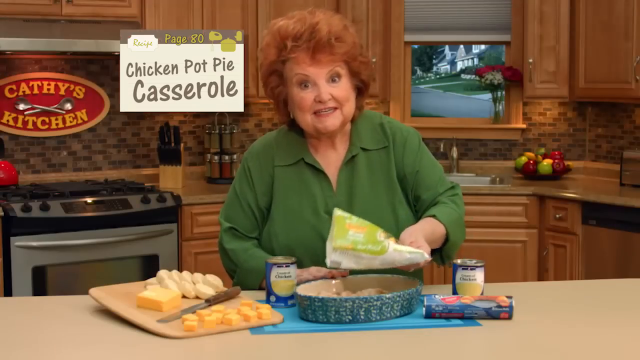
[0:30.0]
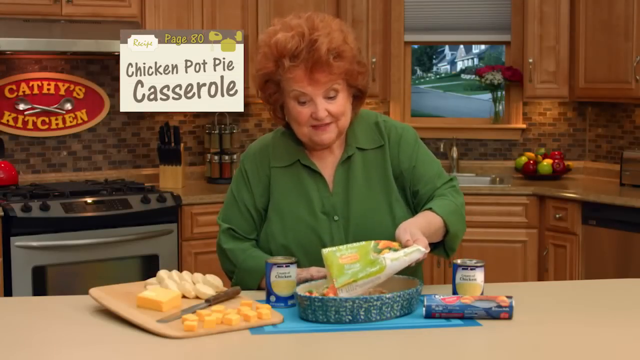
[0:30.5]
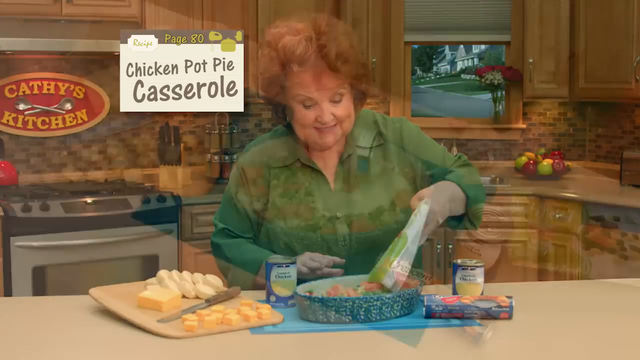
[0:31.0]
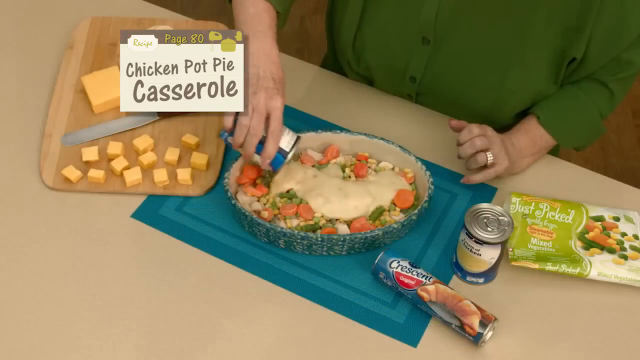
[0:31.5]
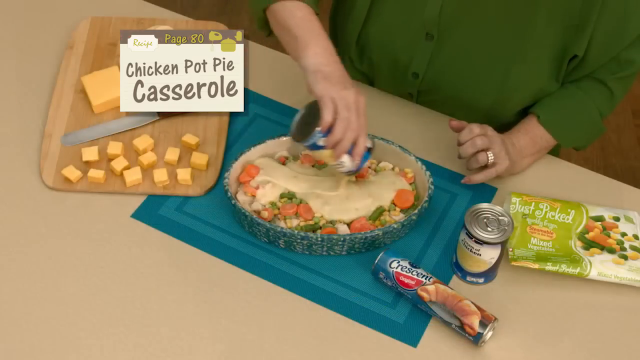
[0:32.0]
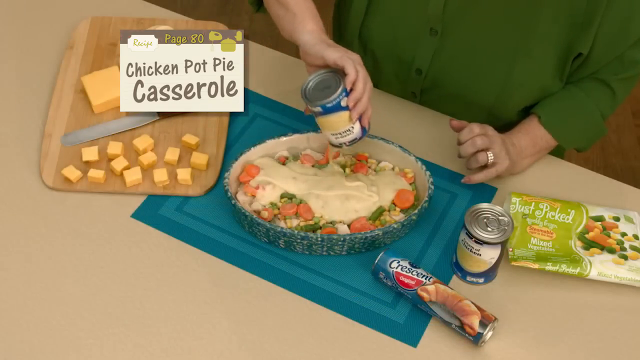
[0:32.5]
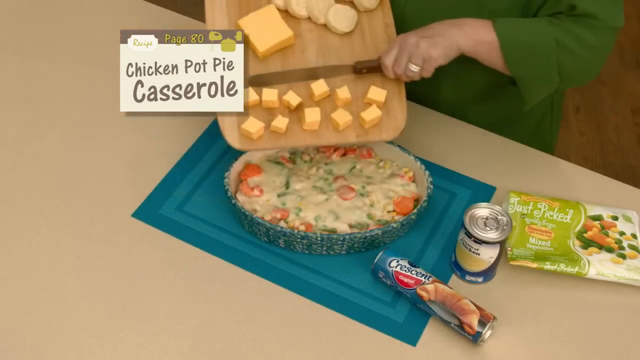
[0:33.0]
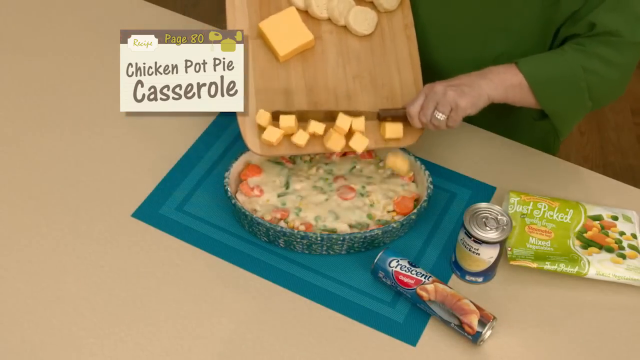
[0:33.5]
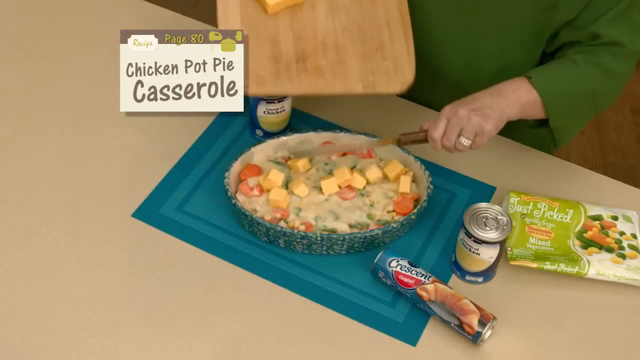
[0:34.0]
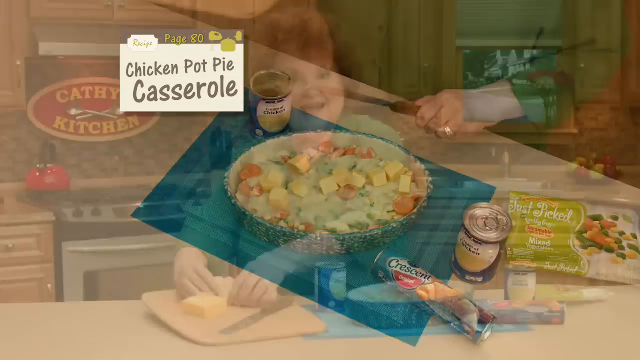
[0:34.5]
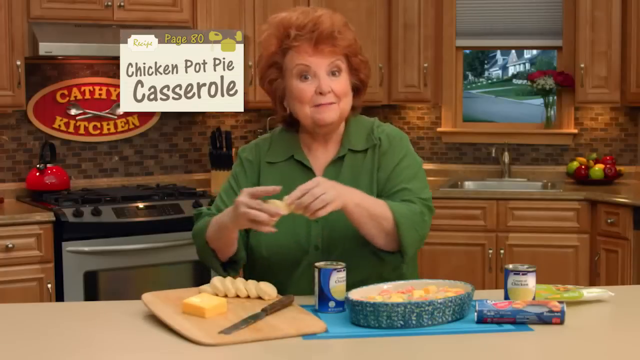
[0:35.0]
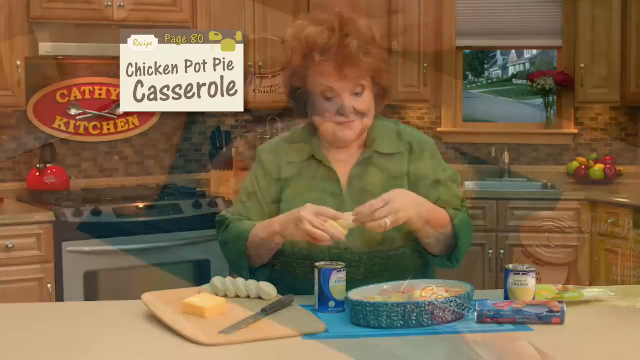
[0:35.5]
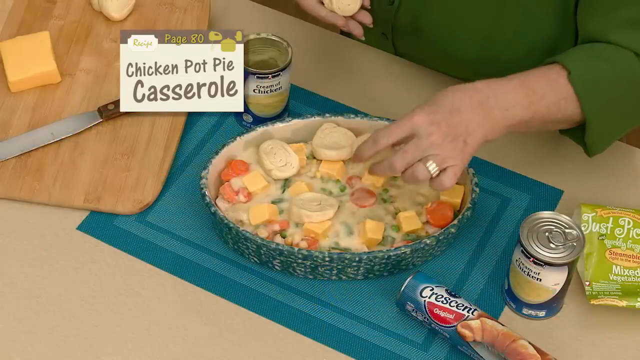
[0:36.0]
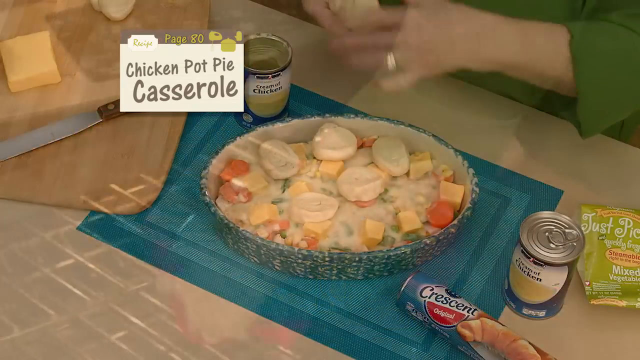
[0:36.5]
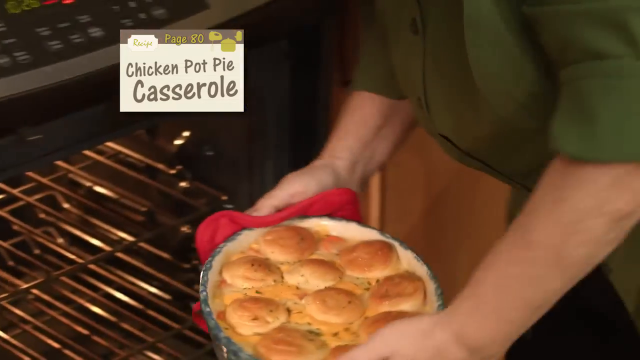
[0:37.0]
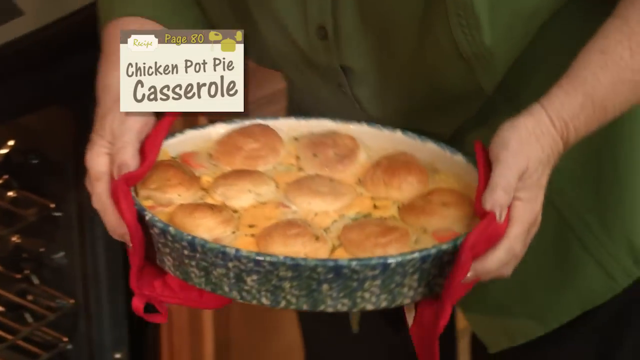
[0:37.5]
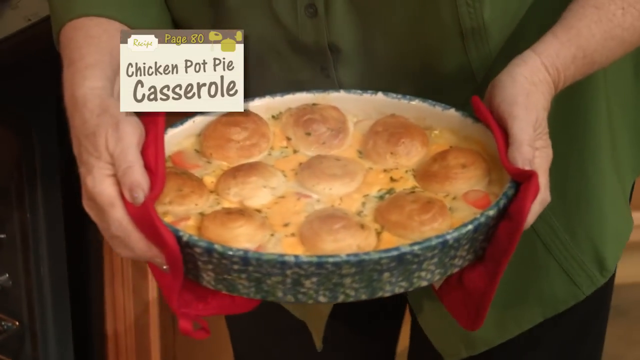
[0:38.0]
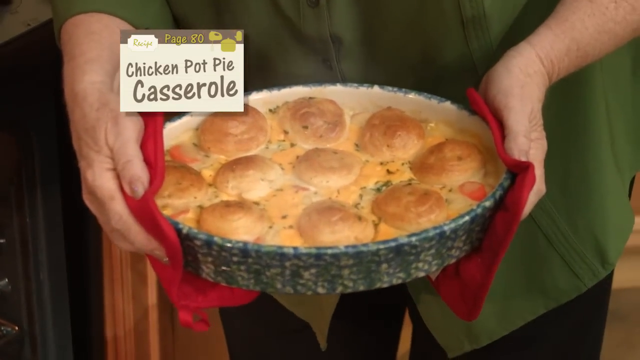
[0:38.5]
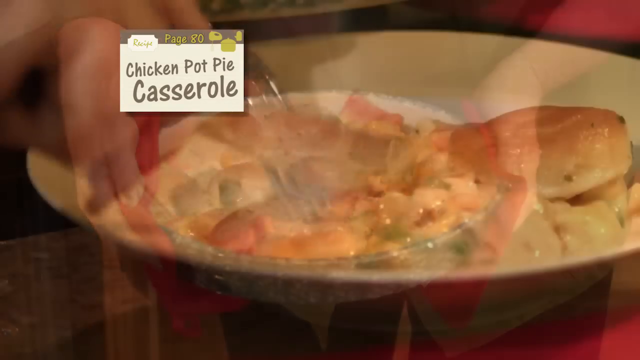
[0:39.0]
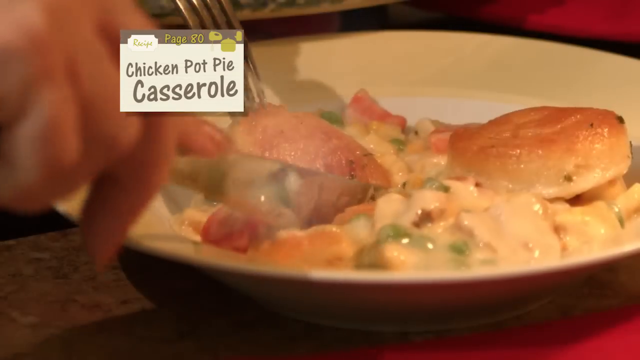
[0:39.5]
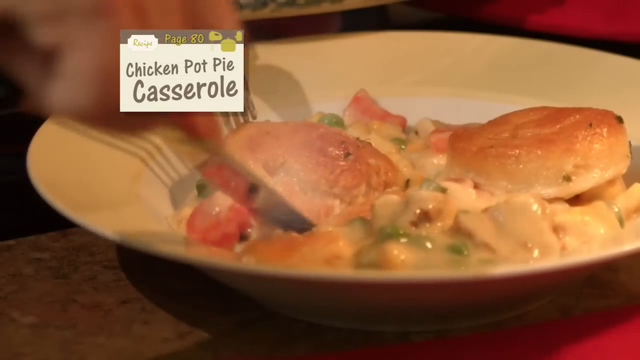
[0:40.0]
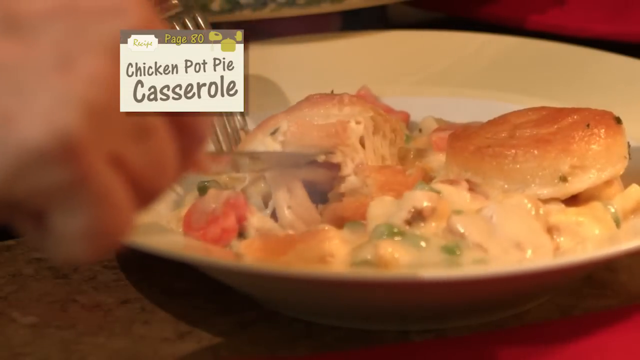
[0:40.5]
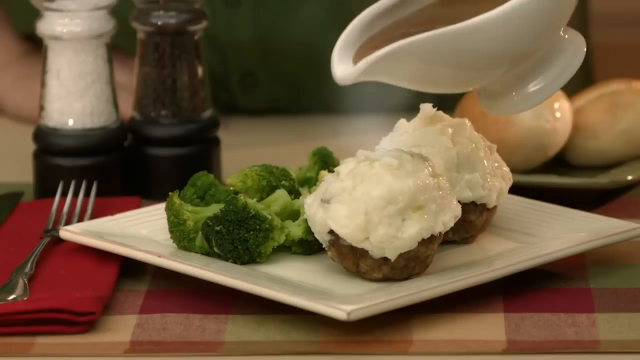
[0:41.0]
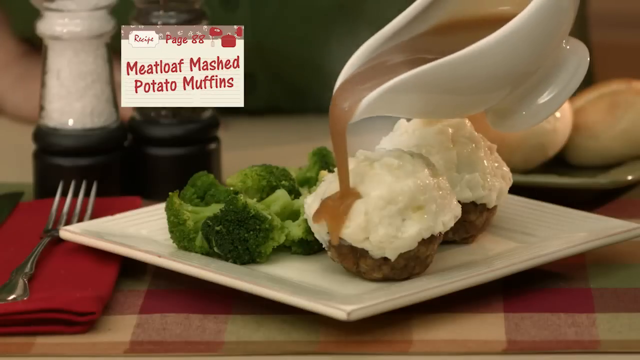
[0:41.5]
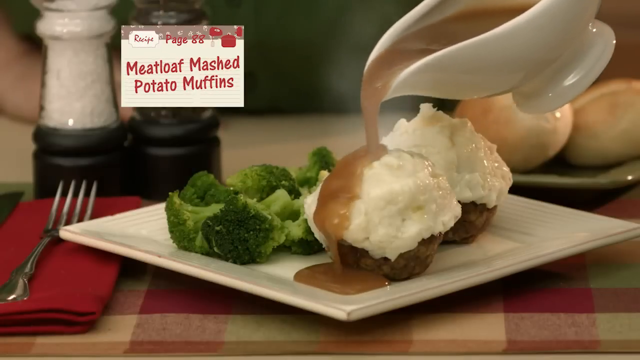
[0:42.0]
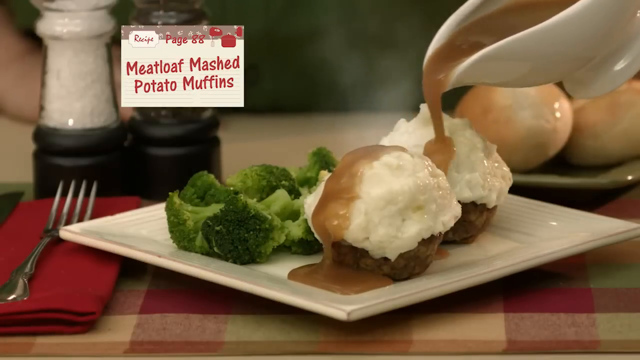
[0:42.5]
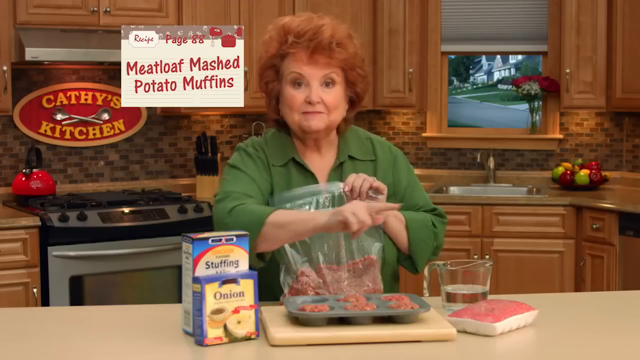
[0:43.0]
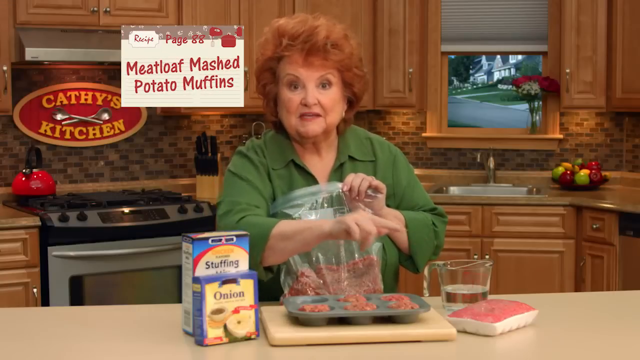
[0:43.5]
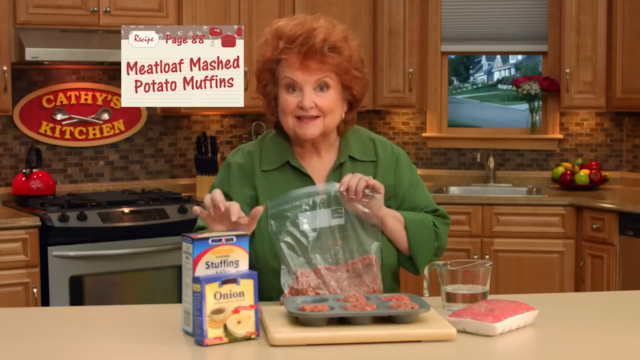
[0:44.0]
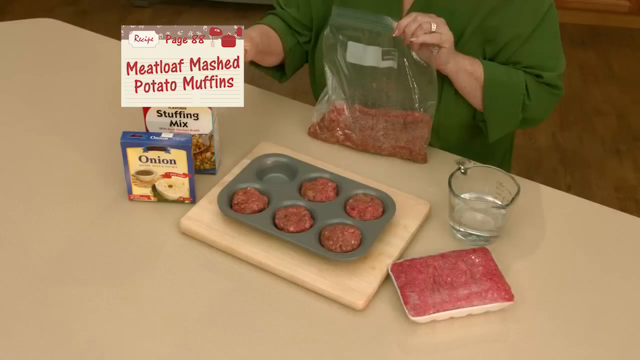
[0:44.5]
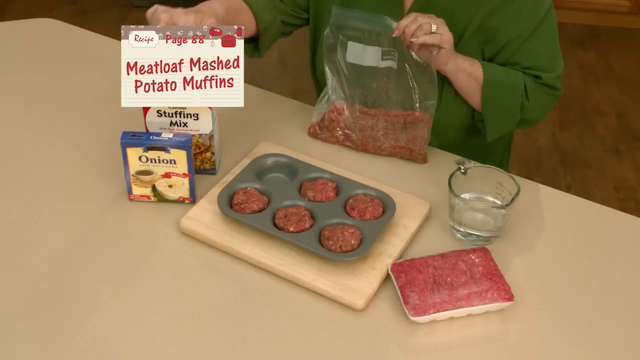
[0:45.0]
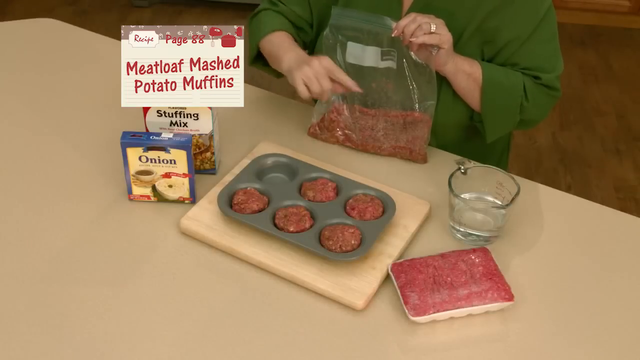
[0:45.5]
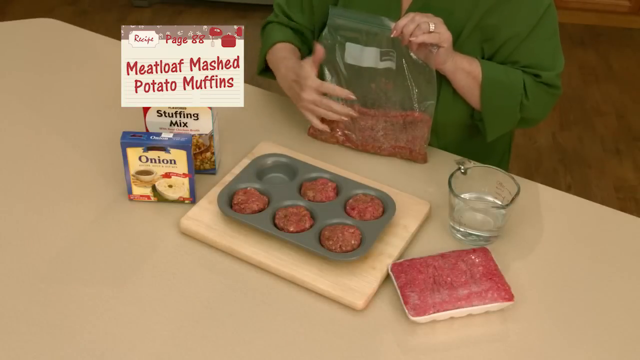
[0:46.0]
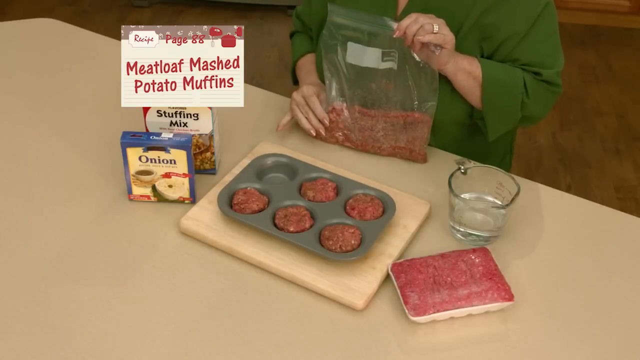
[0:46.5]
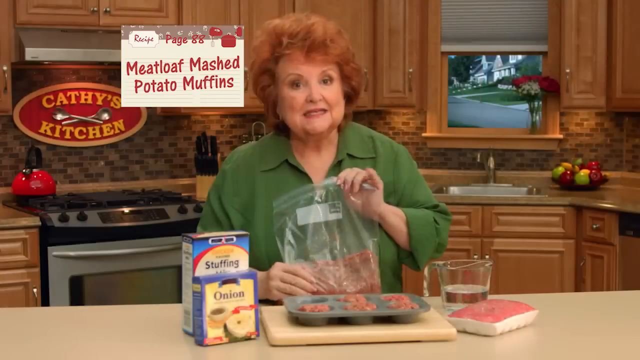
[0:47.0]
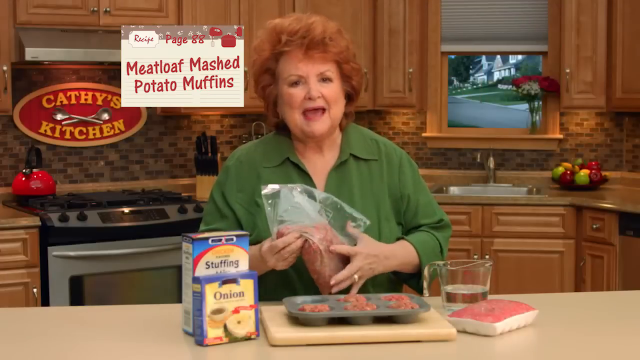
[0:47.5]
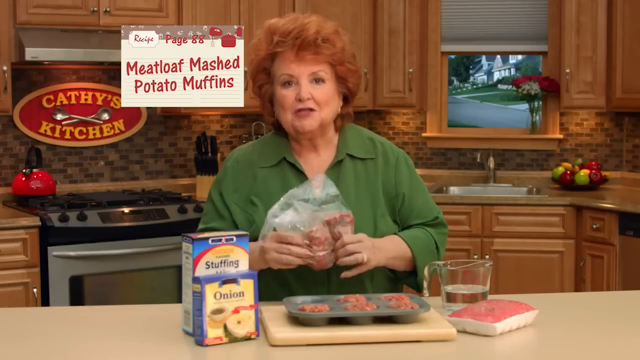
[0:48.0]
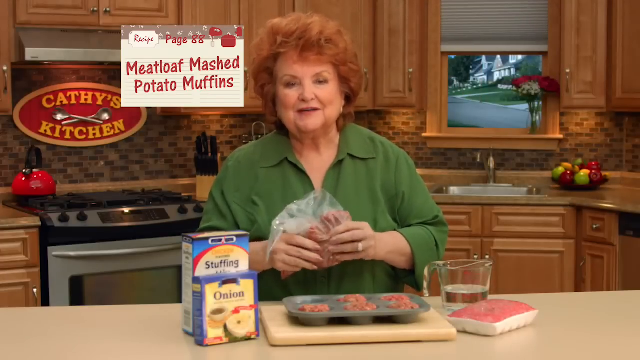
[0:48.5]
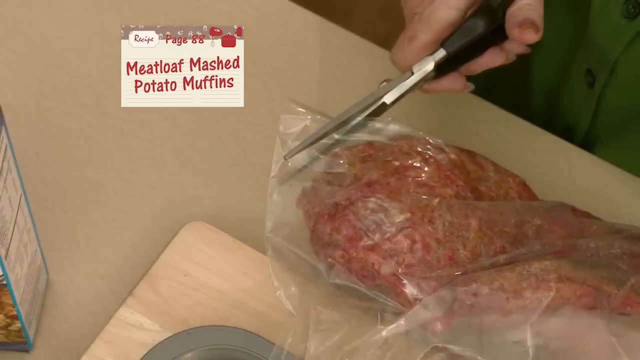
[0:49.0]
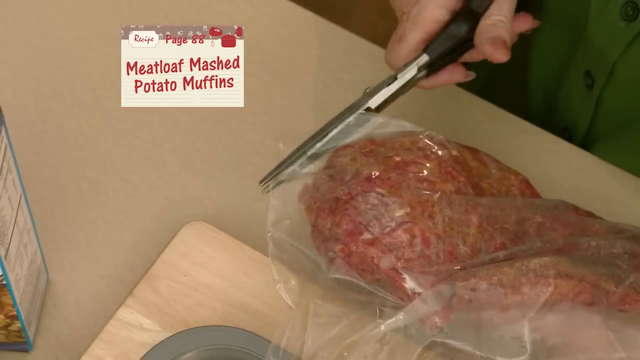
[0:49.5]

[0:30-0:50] The woman is making some type of chicken pot pie casserole. The raw ingredients are shown before she makes it: a package of frozen vegetables, croissants, and what looks like corn. She has a cooking board and puts all the items from the board into the casserole pan she is going to bake. Right after, she takes the finished dish out of the oven; it is clearly done and steamy. The video then switches to a meatloaf and mashed potatoes dish, showing the raw ingredients, such as onions and beef.